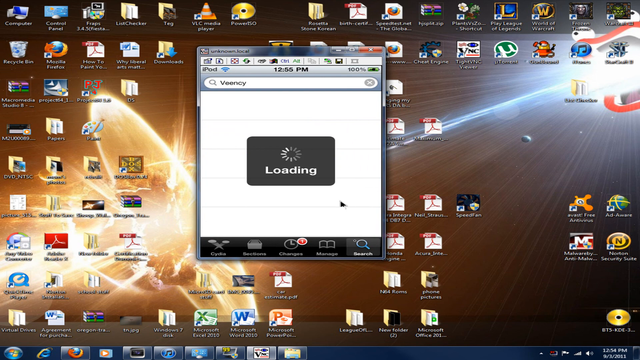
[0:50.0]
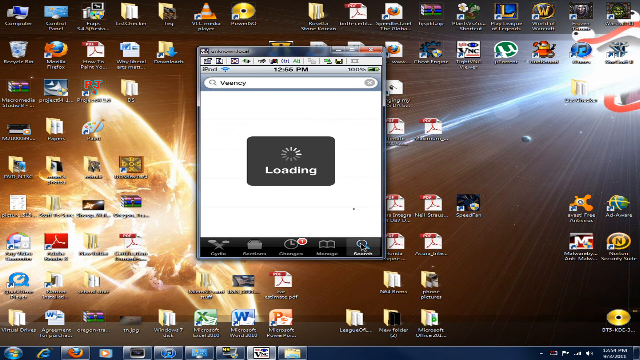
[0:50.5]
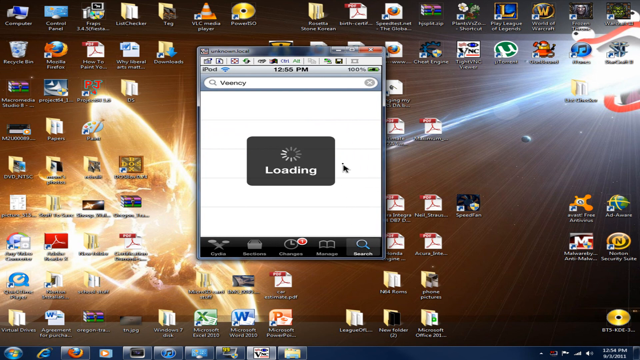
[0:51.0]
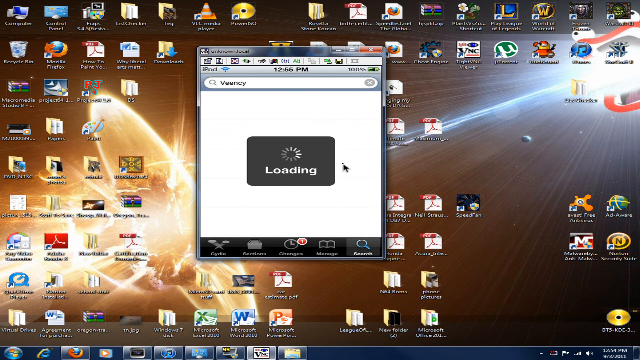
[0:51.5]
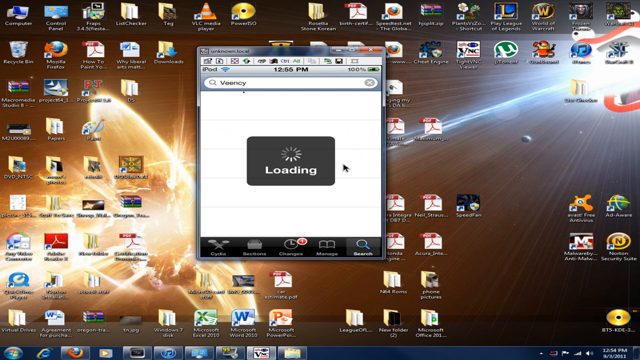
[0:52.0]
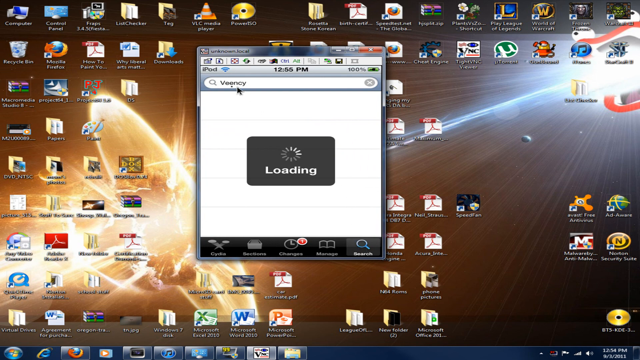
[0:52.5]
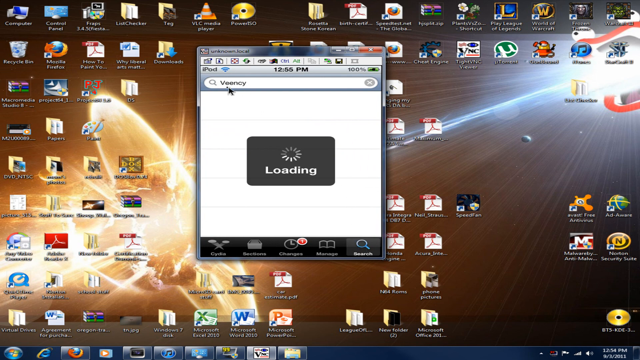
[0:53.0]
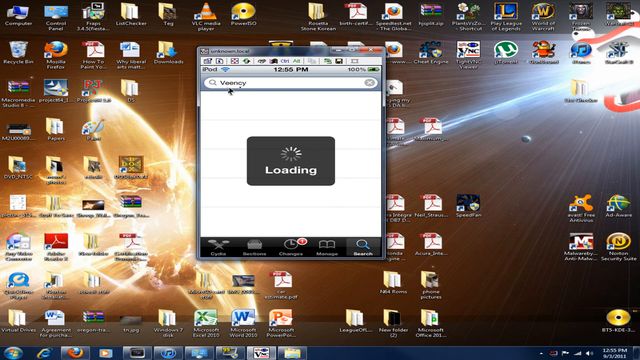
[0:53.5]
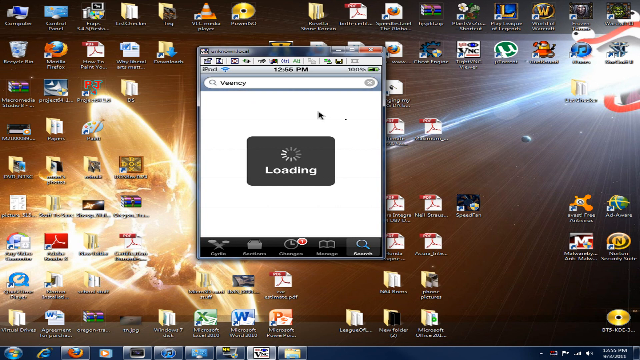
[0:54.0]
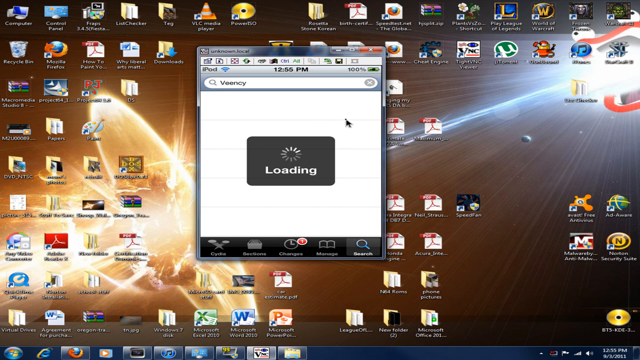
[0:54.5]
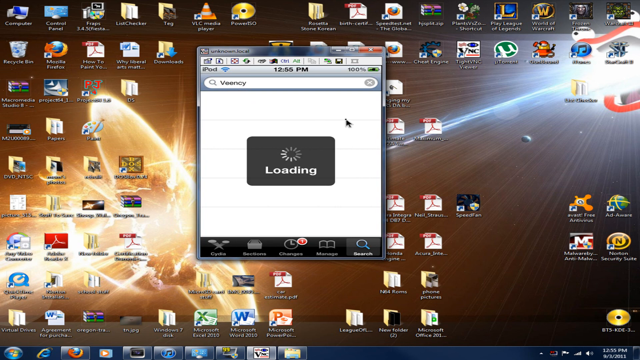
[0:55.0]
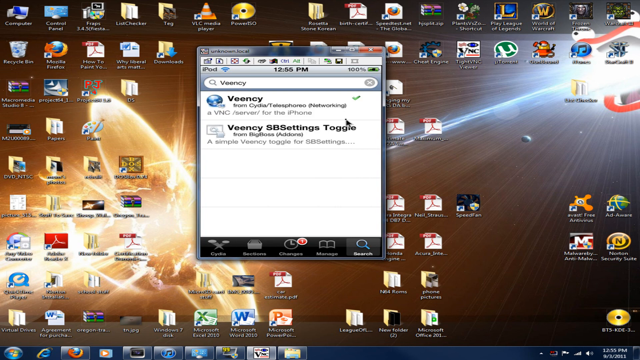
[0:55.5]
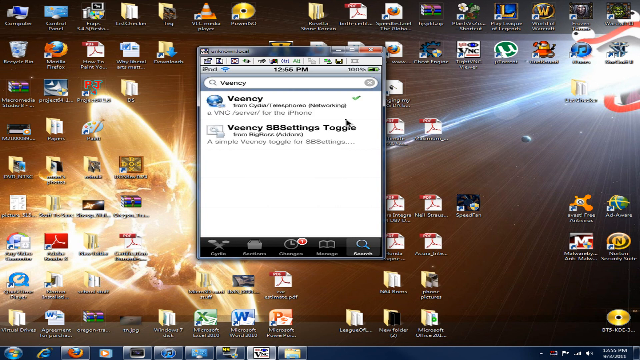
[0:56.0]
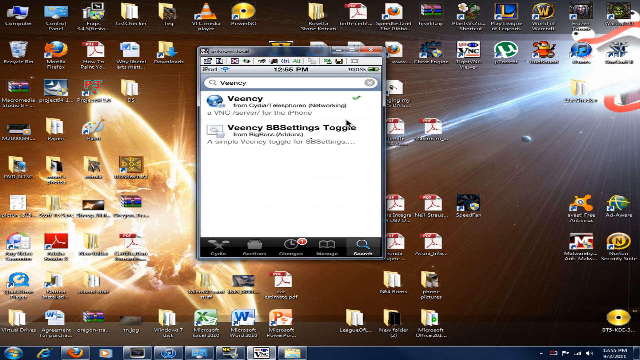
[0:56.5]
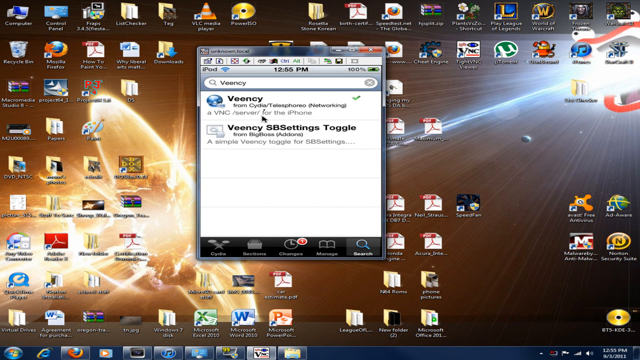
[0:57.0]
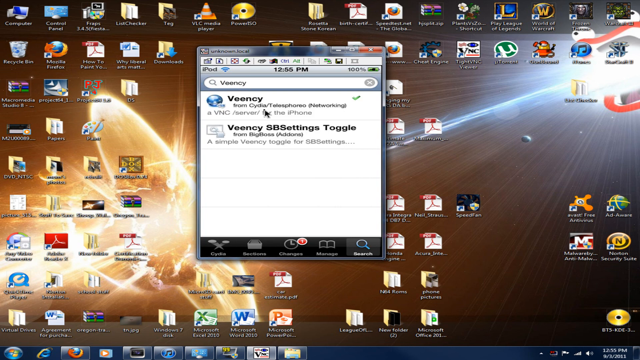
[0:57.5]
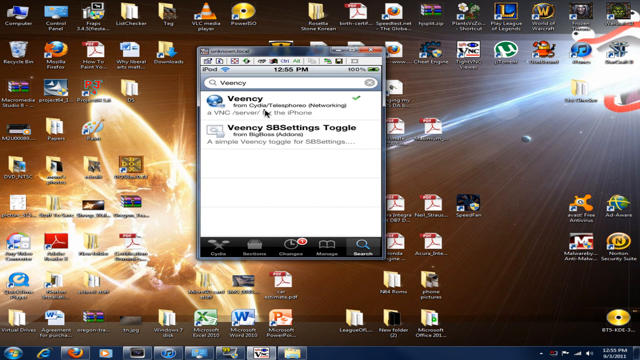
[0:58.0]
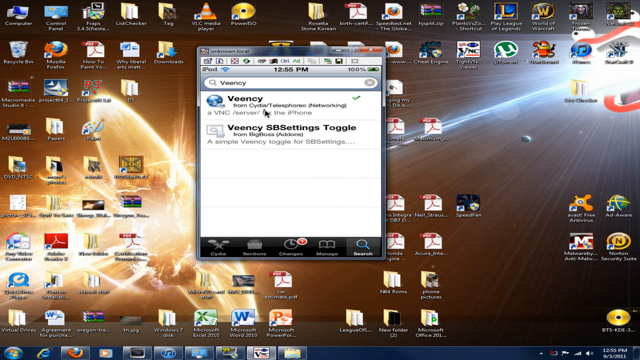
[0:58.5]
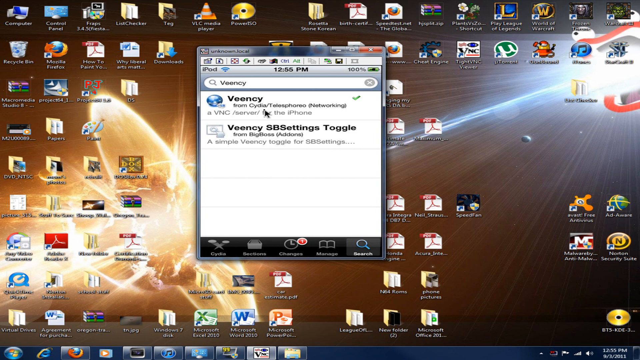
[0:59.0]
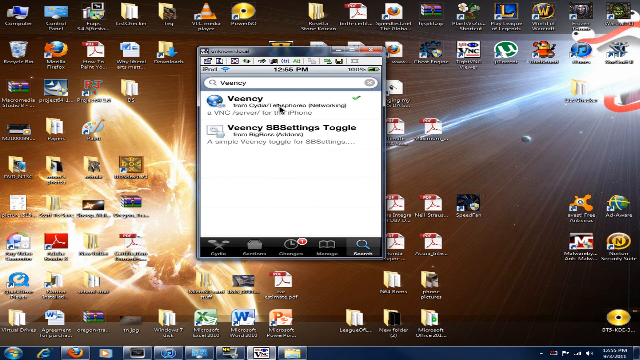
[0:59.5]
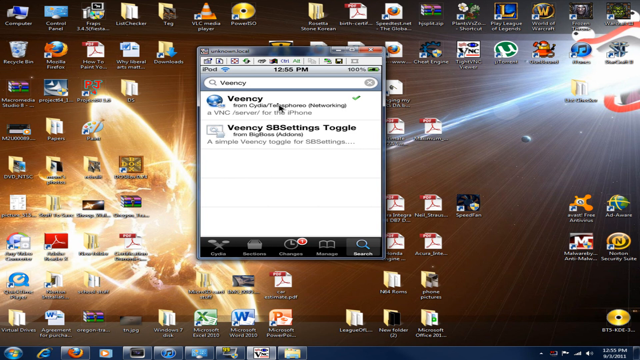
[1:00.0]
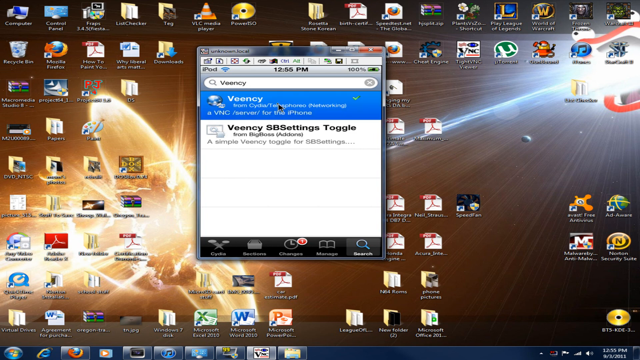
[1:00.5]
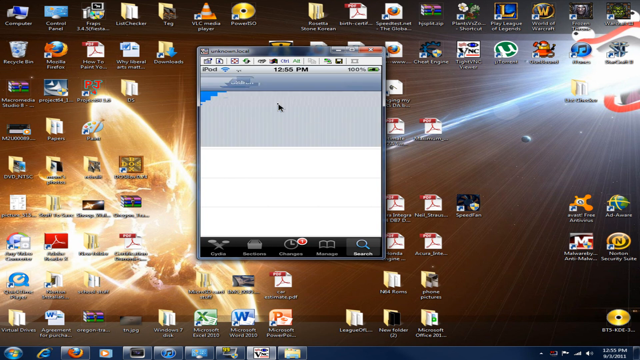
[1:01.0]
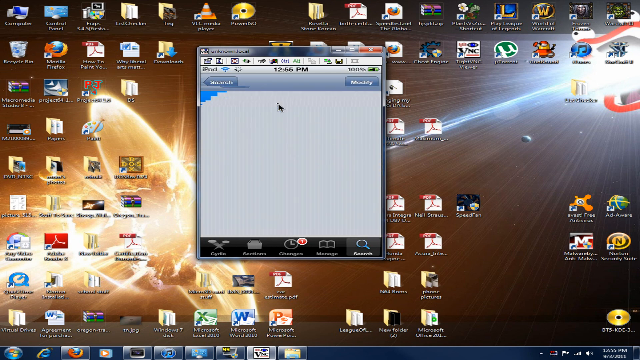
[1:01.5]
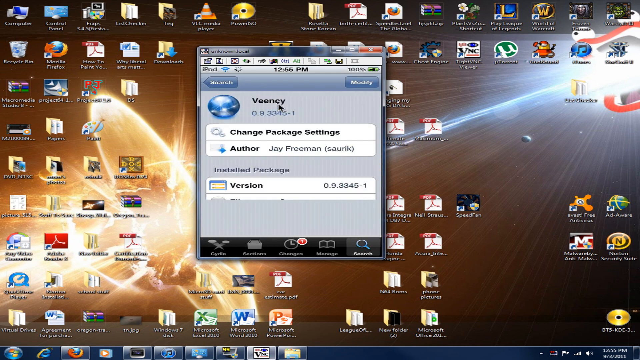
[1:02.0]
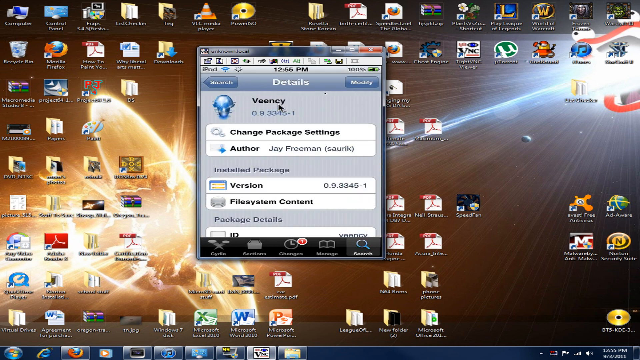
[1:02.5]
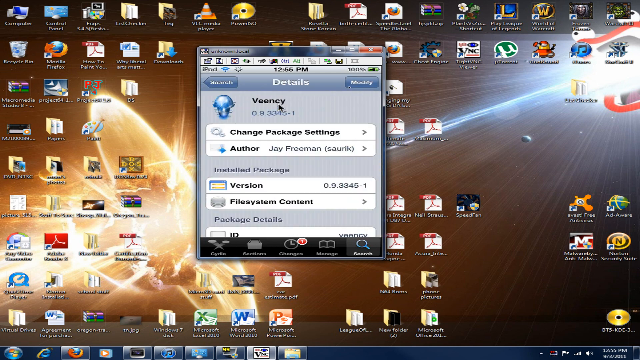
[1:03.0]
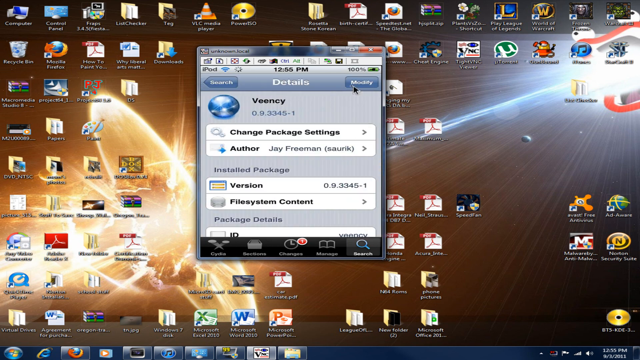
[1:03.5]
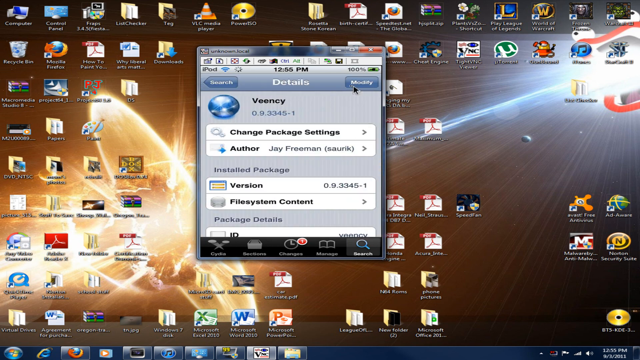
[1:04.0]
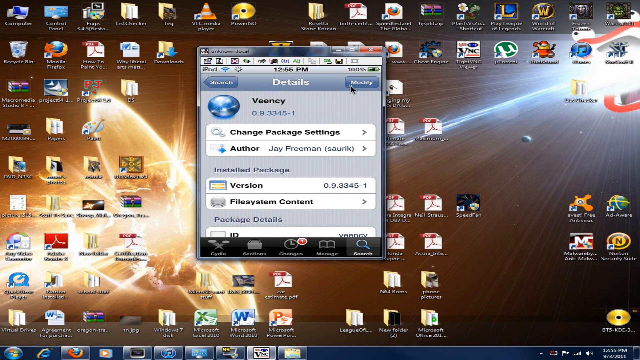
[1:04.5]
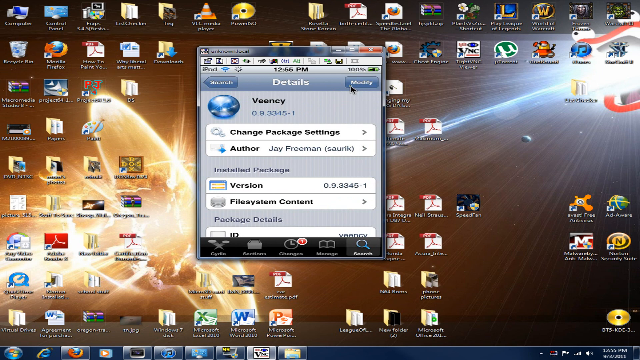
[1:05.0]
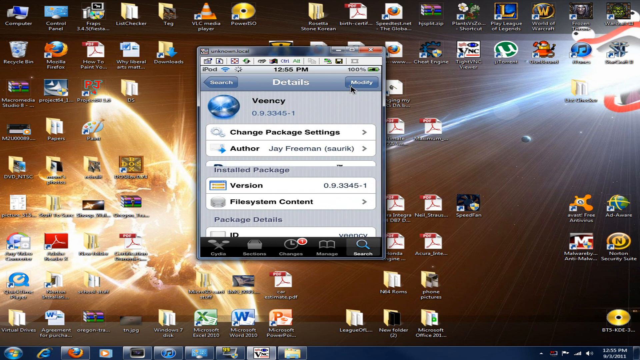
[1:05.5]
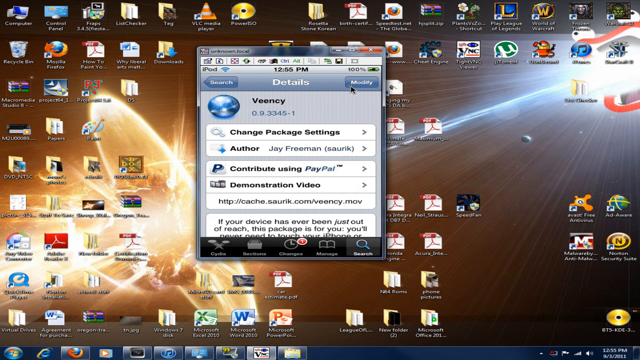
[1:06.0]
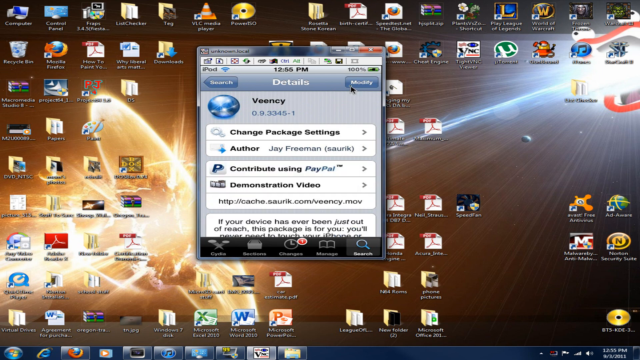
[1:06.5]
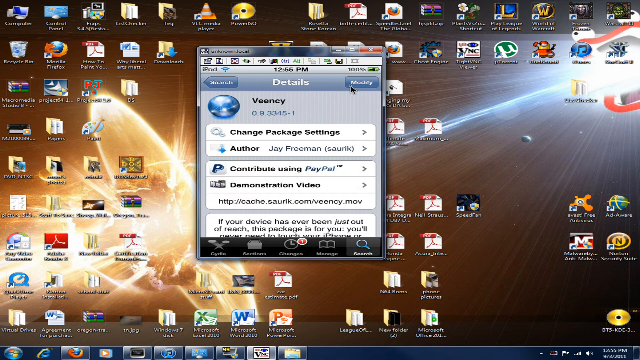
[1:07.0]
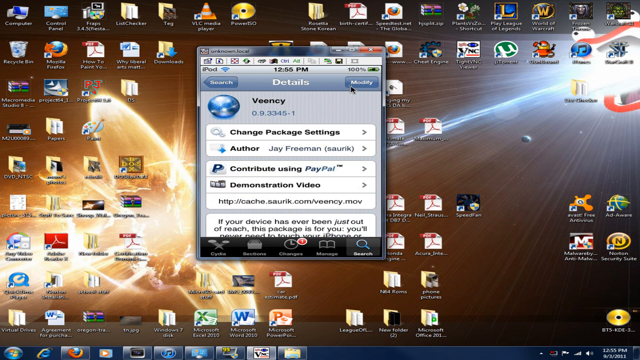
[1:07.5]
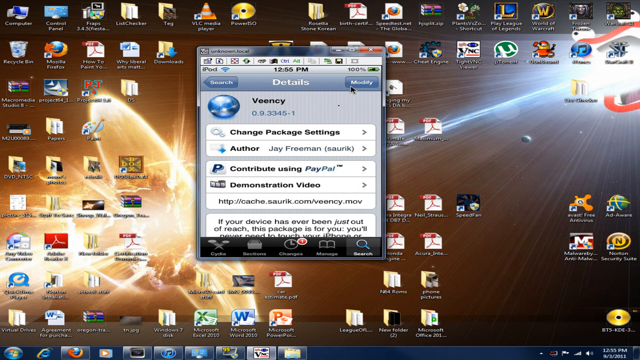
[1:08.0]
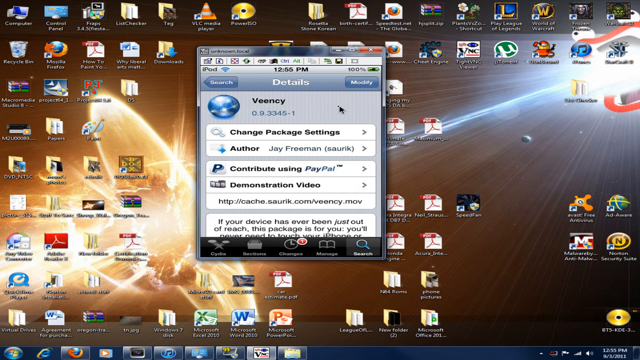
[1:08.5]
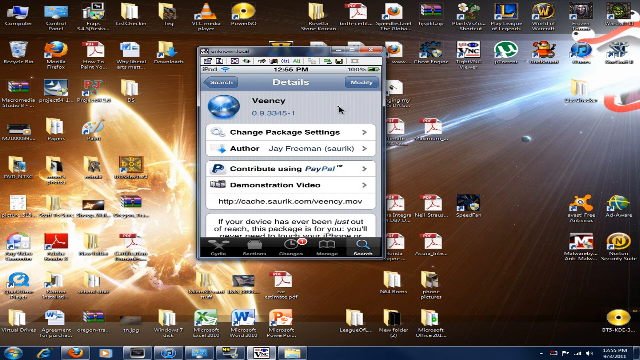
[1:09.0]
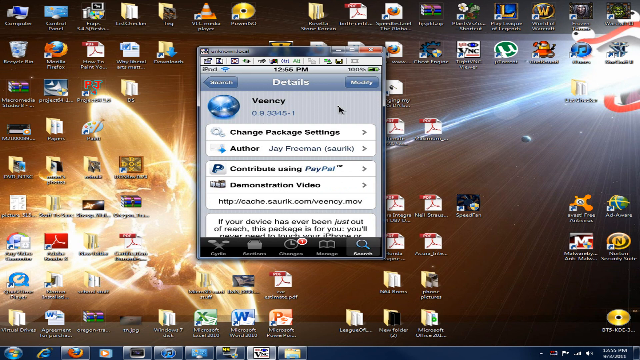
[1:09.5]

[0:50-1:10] A computer screen has an outer space wallpaper showing a planet colliding with another planet, with a big bright explosion around them. There are about 50 or 60 different icons on the screen. A smaller screen is popped up in the middle of the computer screen; at its top it says "ipod", and underneath is the word "veency". Below that is a small black square with the word "loading" and a wheel in the middle showing the screen loading and buffering. When it finishes loading, two options pop up: the first has a little blue circle with "Veency from Cydia" beside it, and the second says "VNC SB settings toggle". The person chooses the first option.